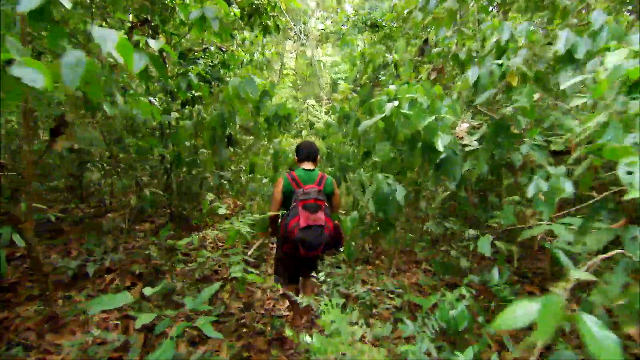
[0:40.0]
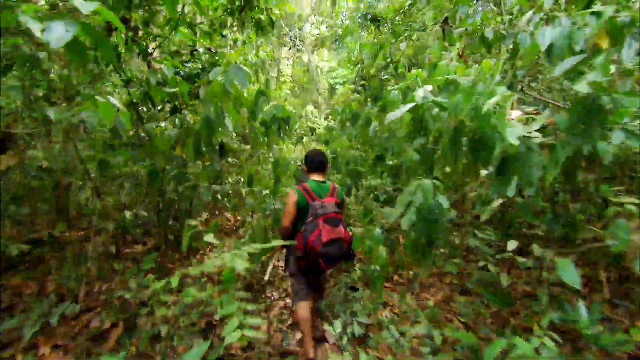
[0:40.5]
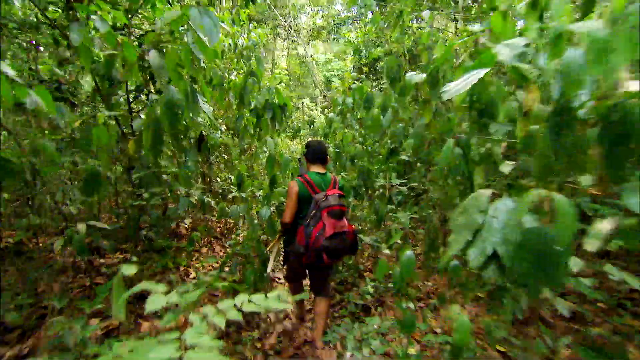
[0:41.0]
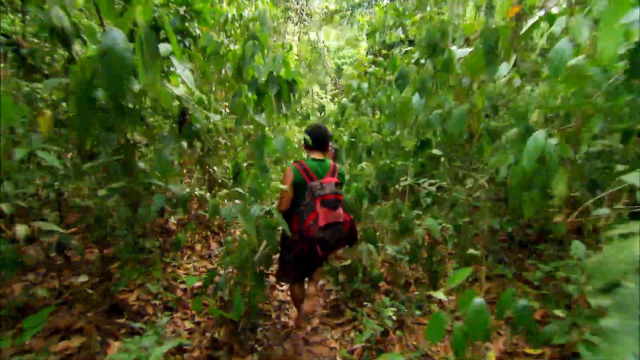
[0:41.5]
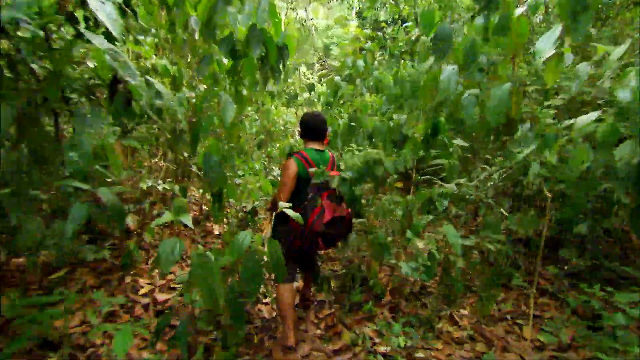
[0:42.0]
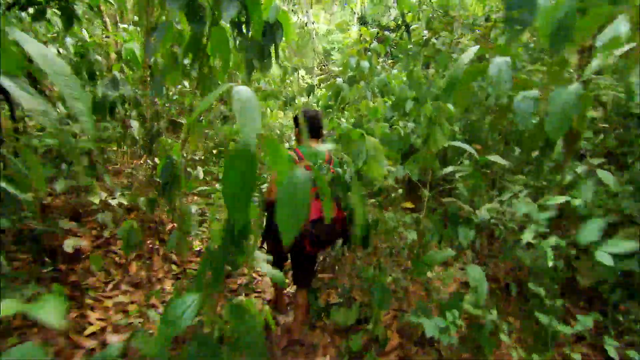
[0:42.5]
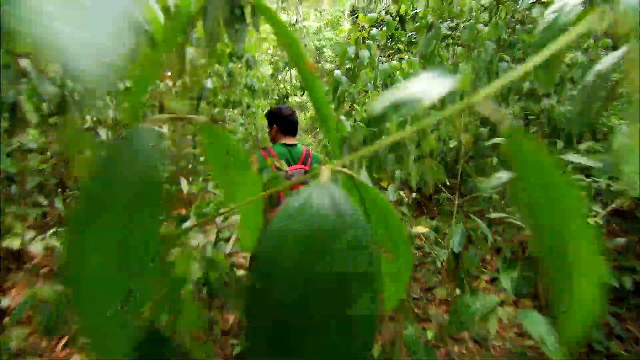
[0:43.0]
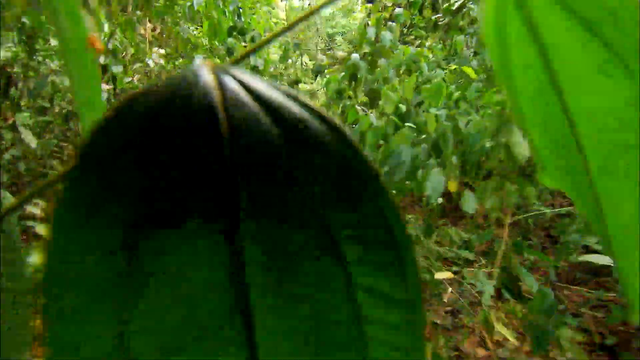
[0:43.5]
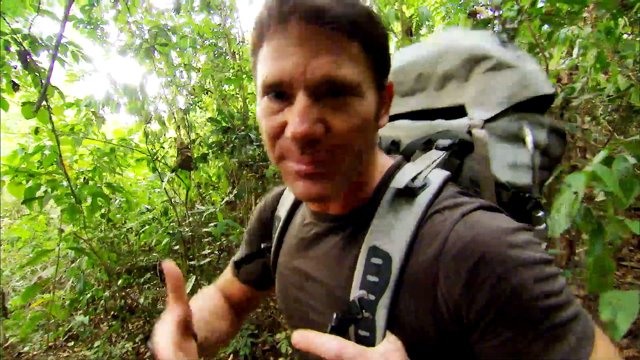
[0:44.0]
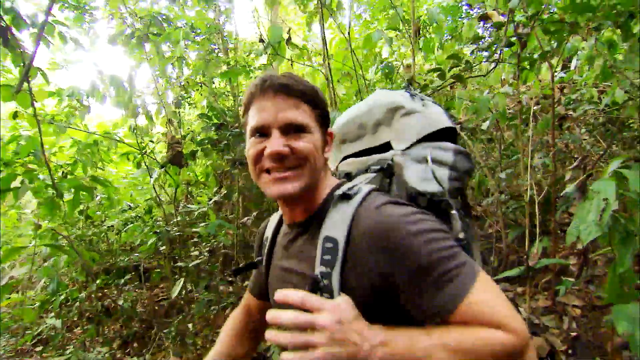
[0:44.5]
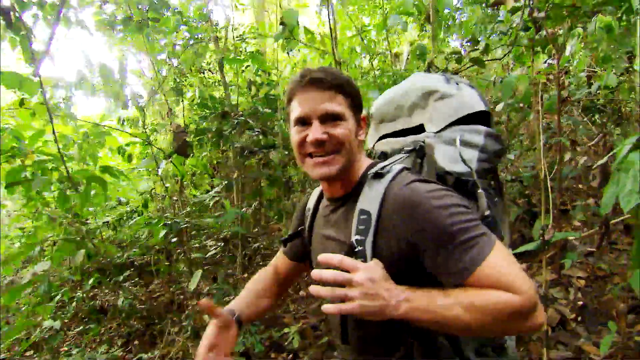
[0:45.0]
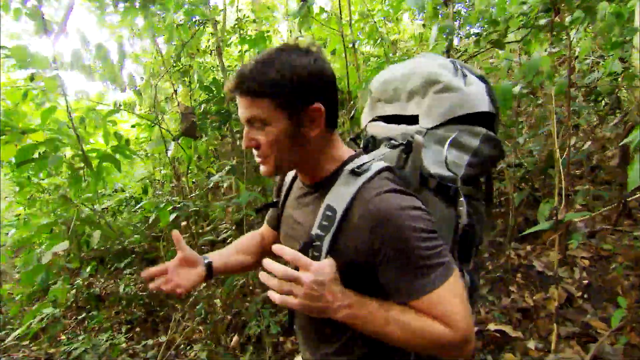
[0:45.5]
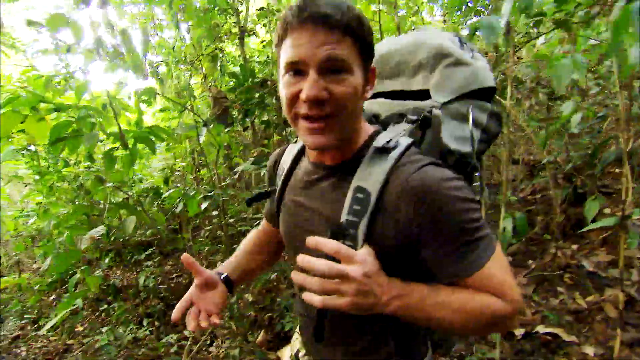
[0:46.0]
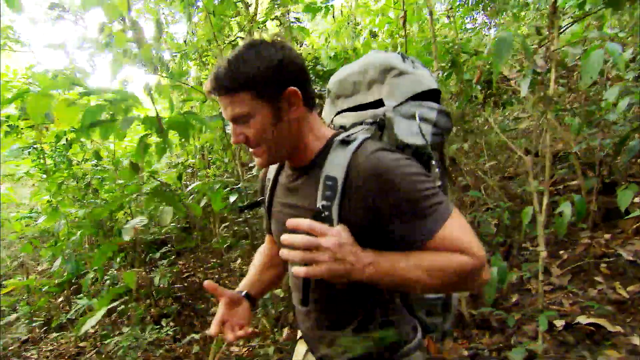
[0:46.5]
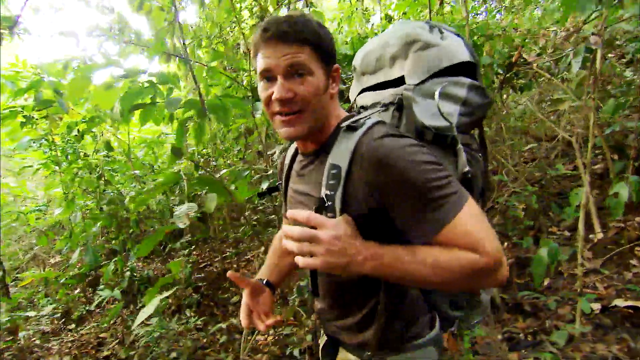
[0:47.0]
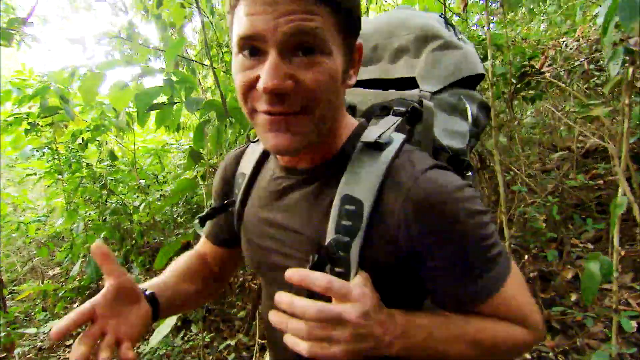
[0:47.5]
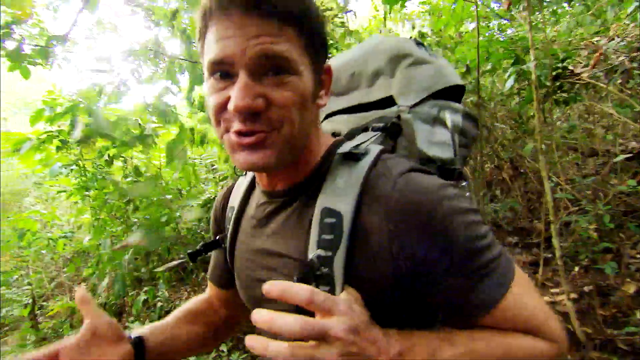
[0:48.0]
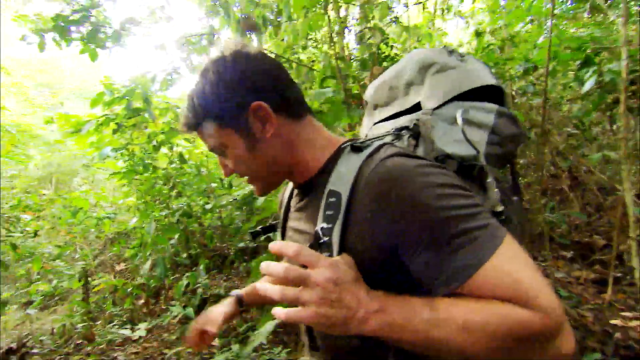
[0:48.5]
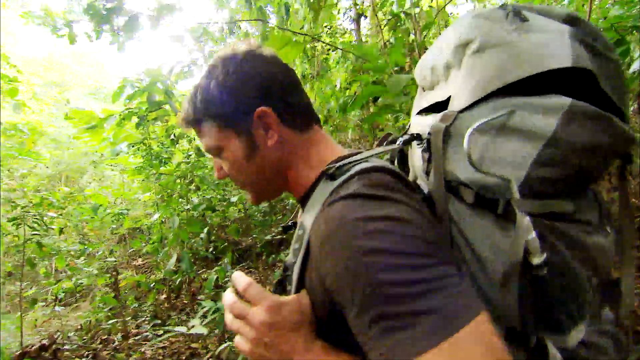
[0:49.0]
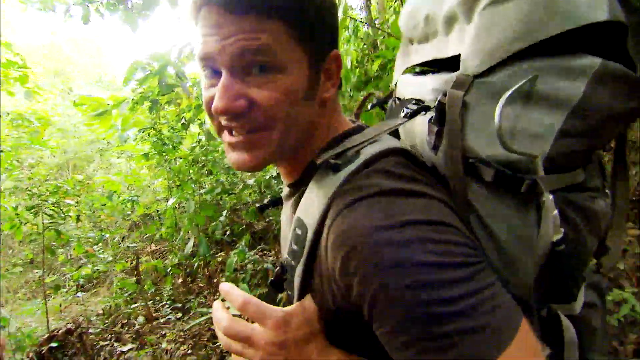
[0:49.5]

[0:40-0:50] The person with the backpack keeps walking away from the camera, apparently holding some kind of stick in their left hand. The footage then shows the man from earlier in the t-shirt, wearing a large gray backpack. He is turned toward the camera while walking down a small hill in the rainforest or forest-like area, gesturing toward the camera like the host of a show. The whole time, his left thumb is looped into his backpack strap while his right hand waves as if he is hosting.